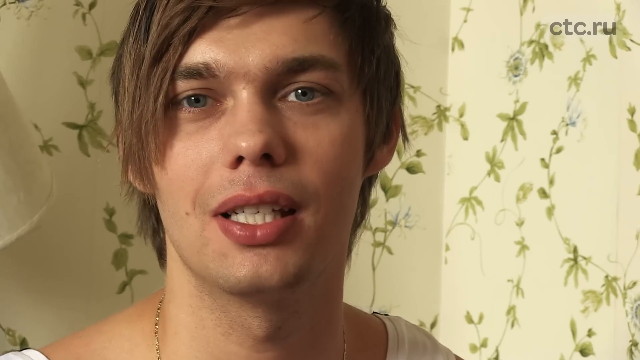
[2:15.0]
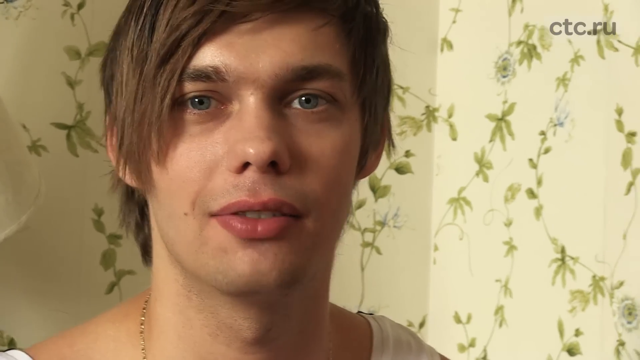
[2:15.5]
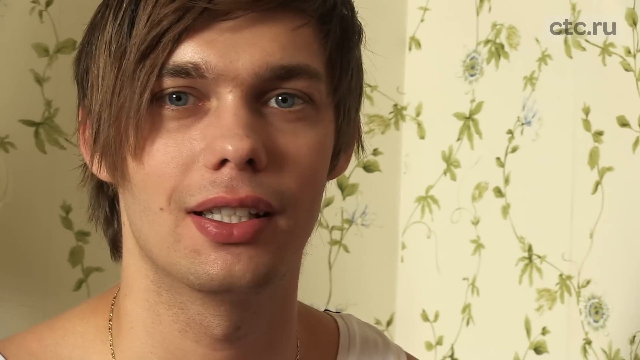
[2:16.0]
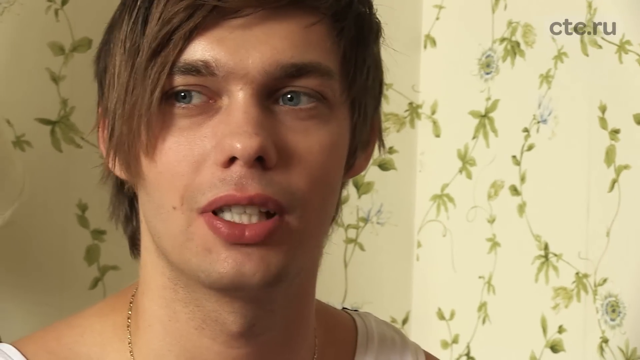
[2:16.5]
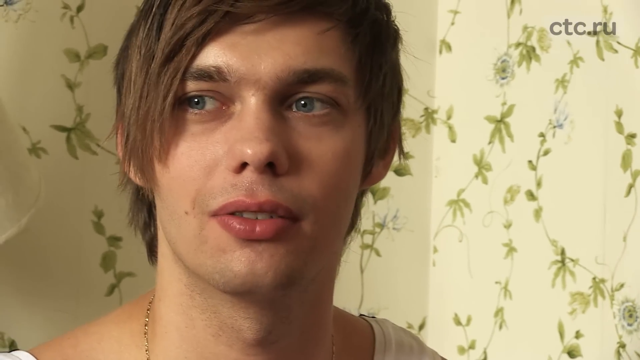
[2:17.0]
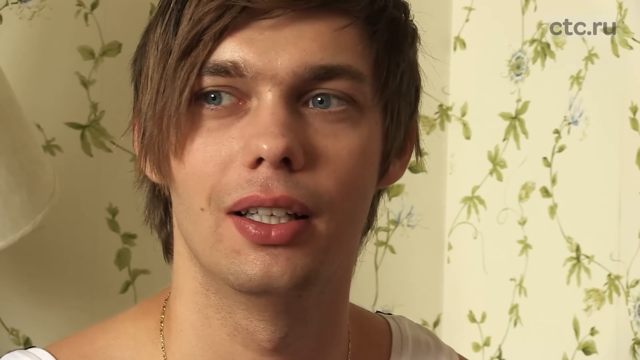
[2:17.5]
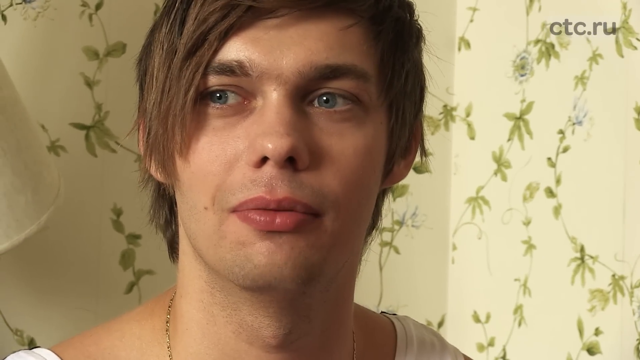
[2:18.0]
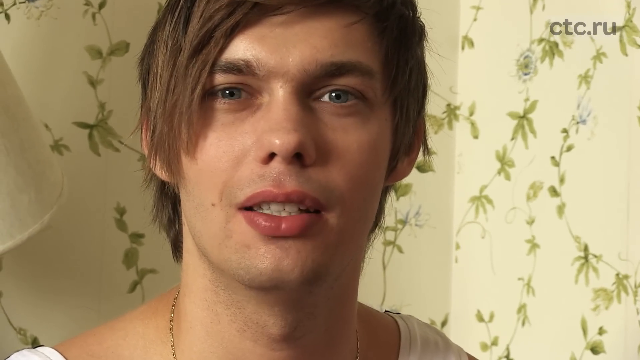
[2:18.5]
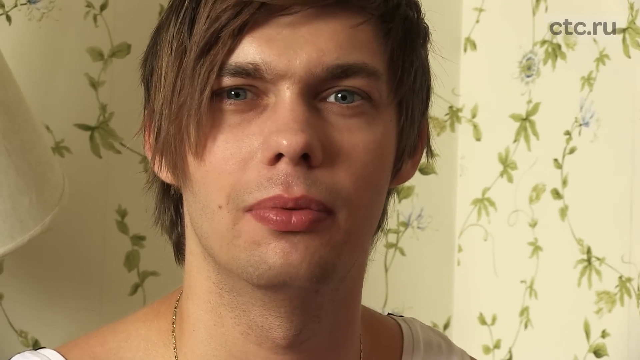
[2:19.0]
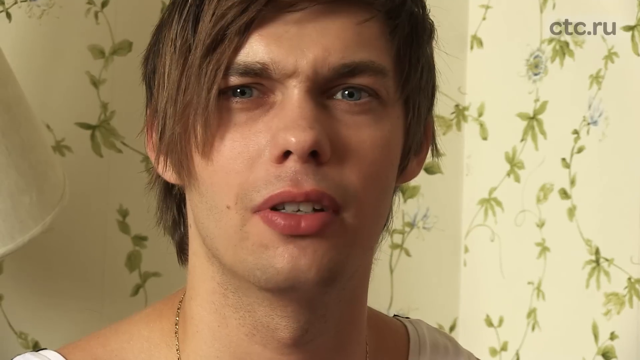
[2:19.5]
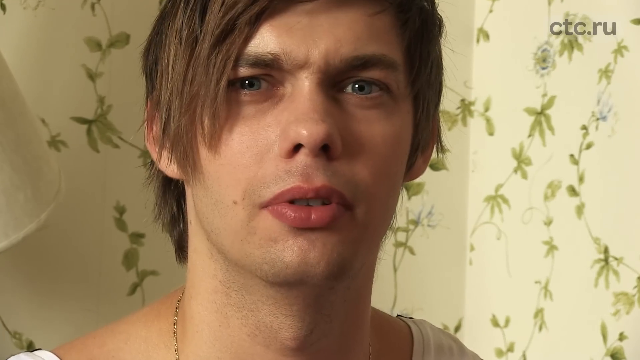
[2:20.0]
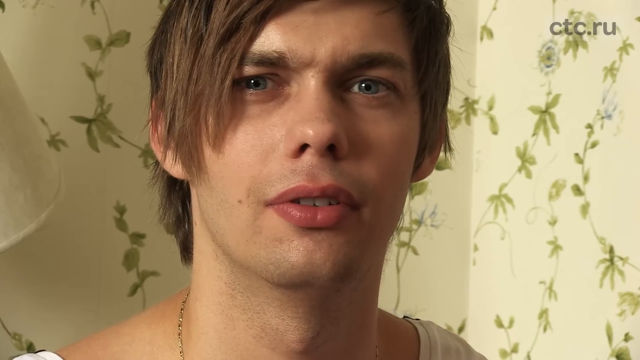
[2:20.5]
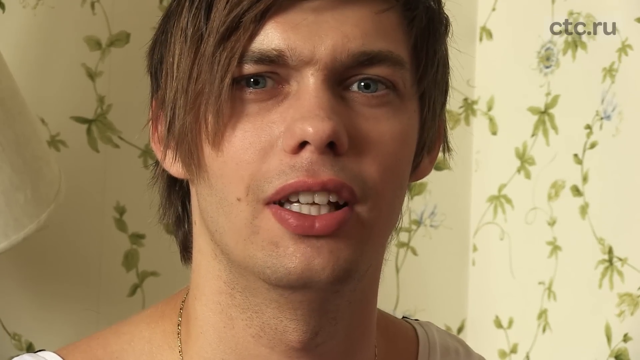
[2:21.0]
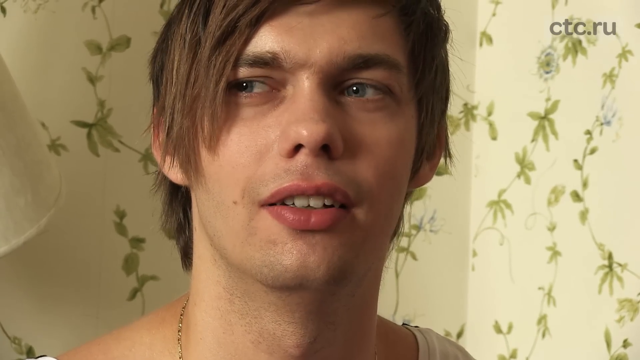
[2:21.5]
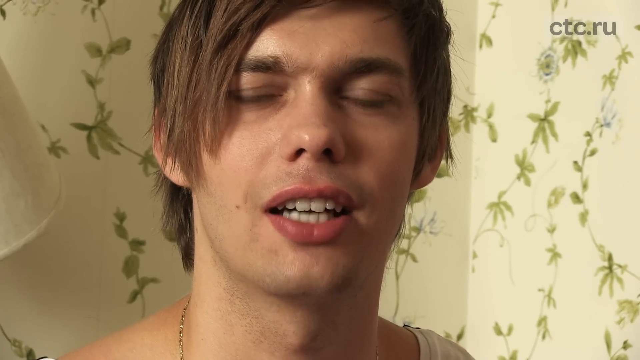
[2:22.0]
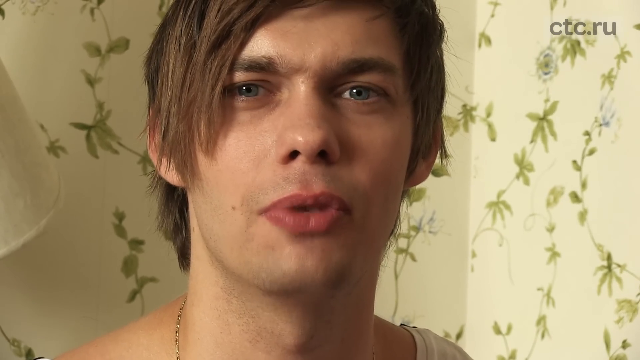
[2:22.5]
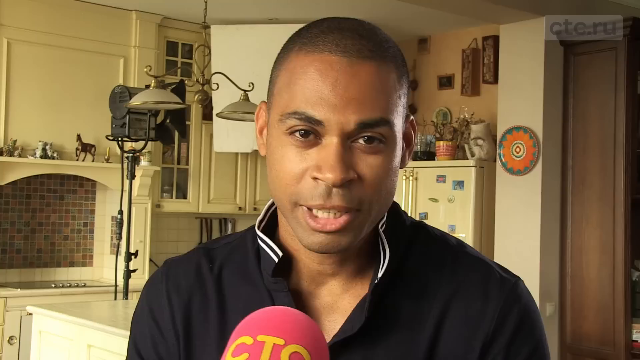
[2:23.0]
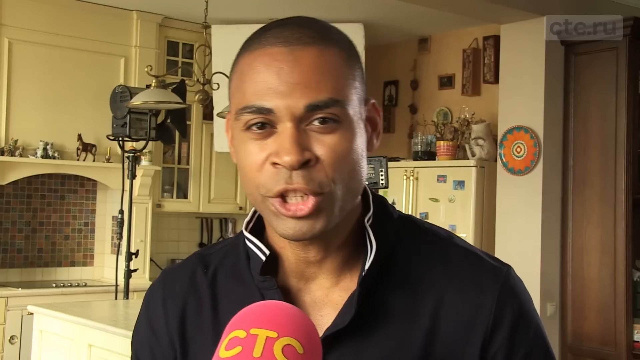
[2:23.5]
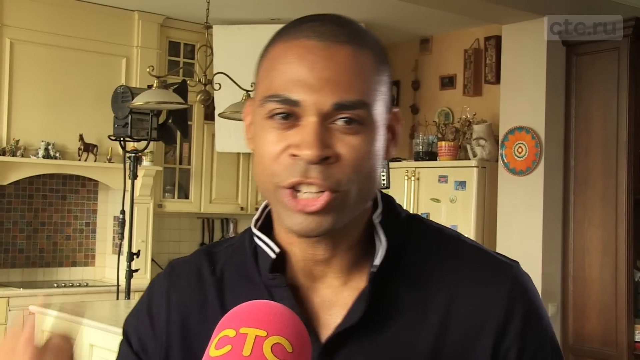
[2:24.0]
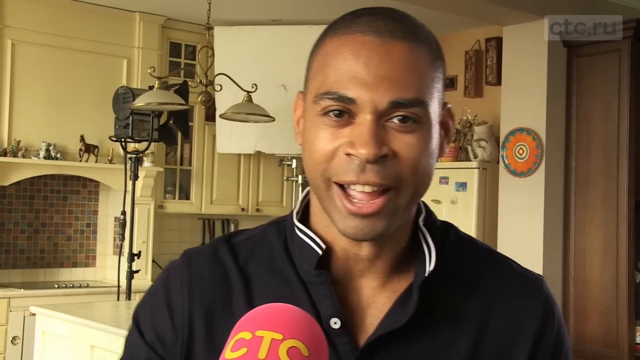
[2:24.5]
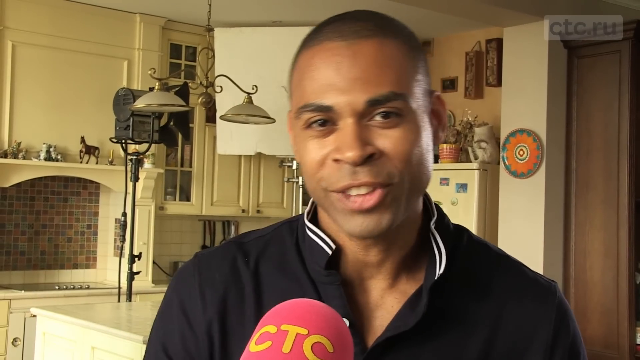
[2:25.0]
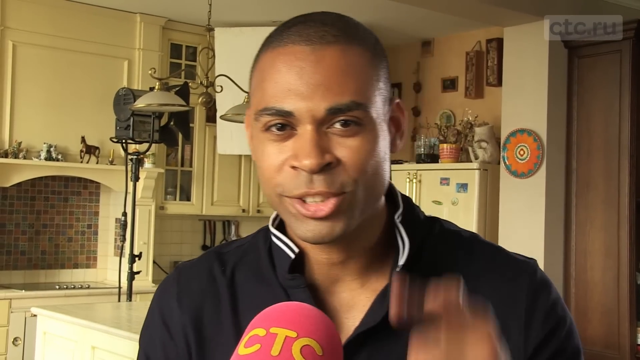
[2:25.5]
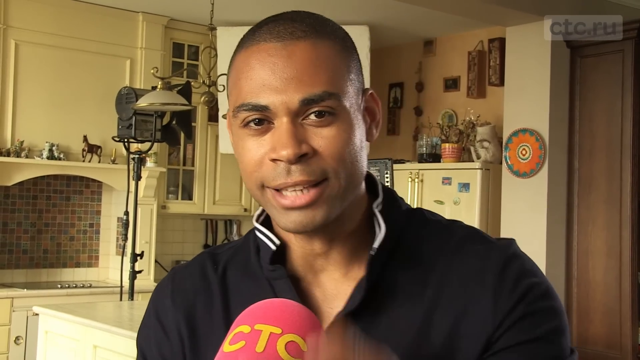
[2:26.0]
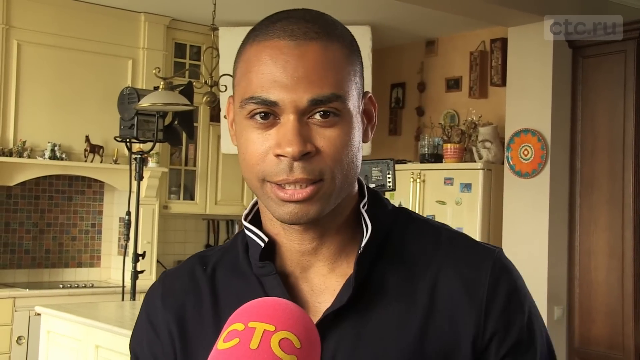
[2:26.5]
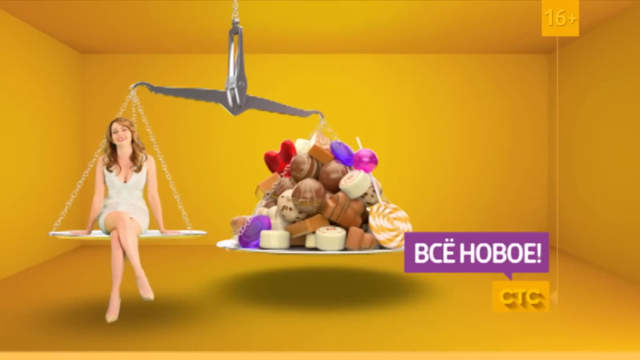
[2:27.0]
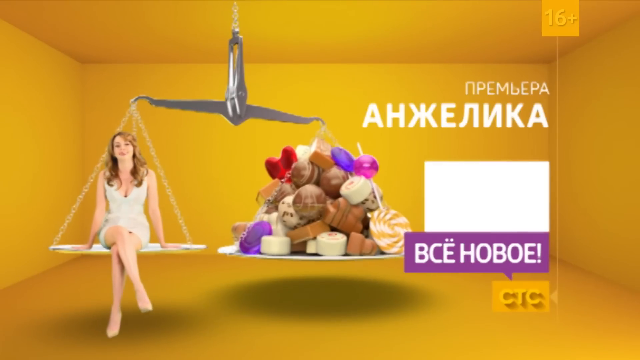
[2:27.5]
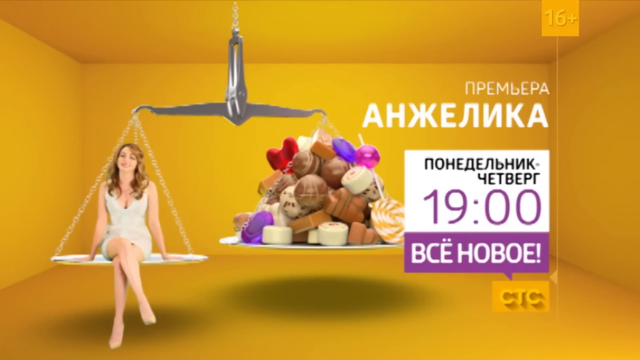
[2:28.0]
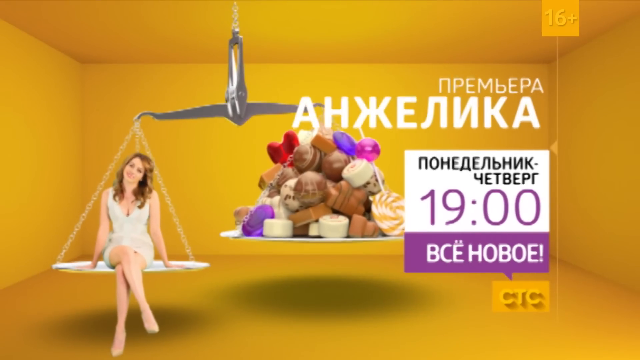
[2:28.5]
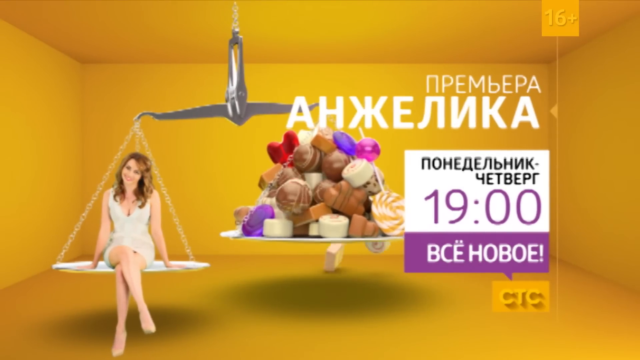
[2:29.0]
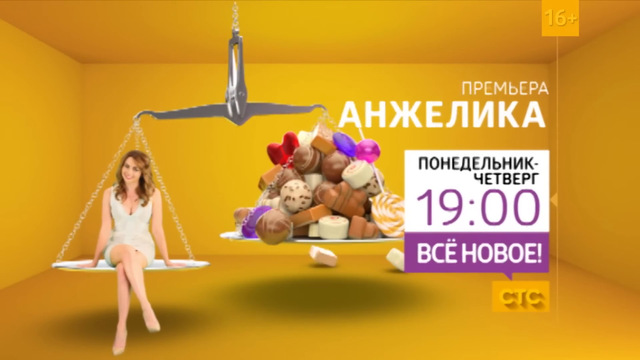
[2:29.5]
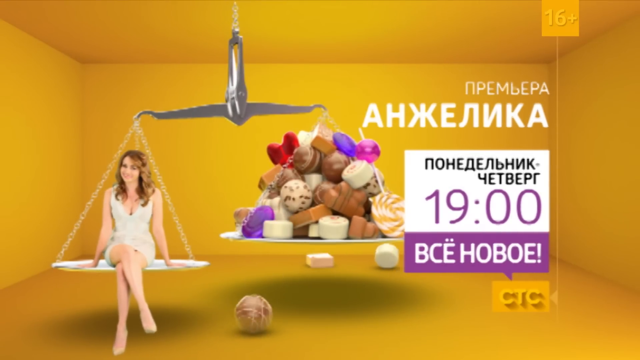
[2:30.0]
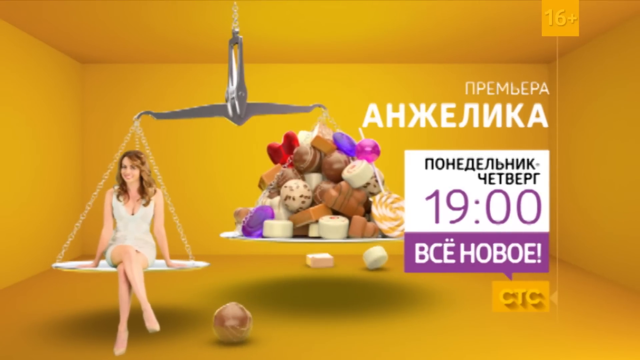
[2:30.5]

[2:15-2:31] A close-up shows just the face of what is apparently the white actor being interviewed; no microphone is visible, and he is probably sitting on the interview couch. He looks away from the camera, then at the camera. Then the black actor, being interviewed, talks directly to the camera and points at it. A quick ad for the channel follows: a lady sits on a scale and fluffy stuff falls off the other side of the scale. Then the video ends.